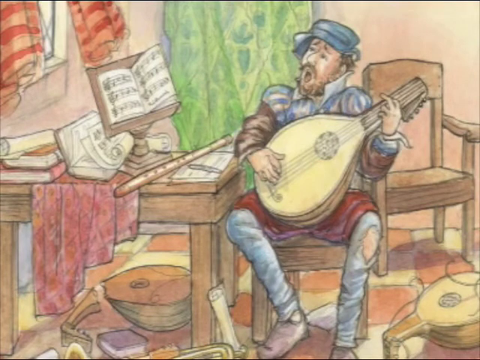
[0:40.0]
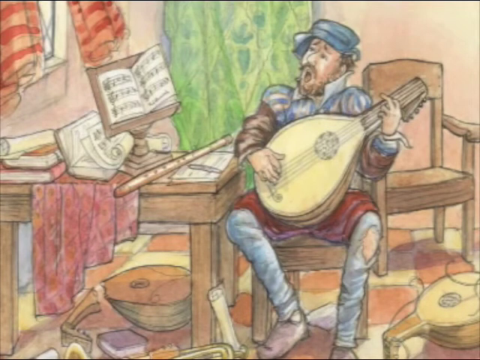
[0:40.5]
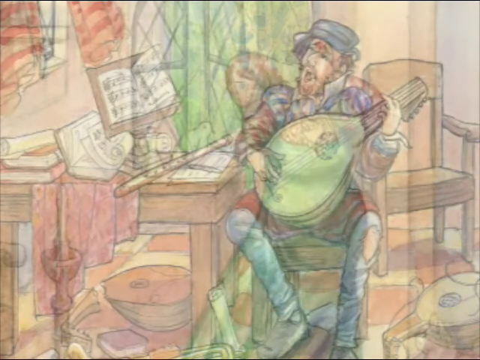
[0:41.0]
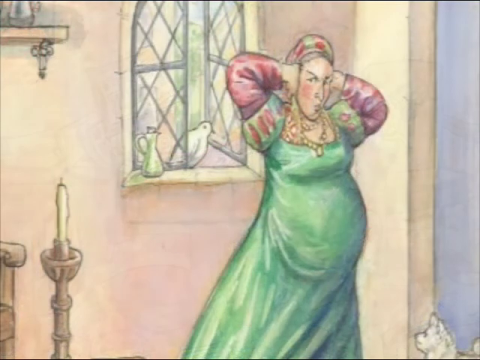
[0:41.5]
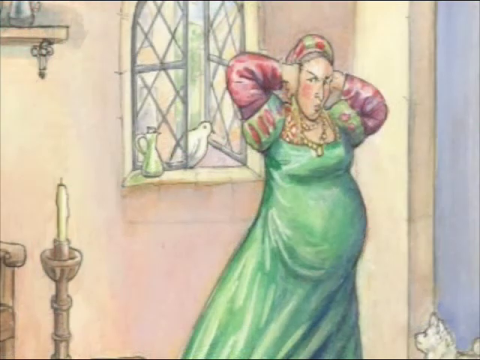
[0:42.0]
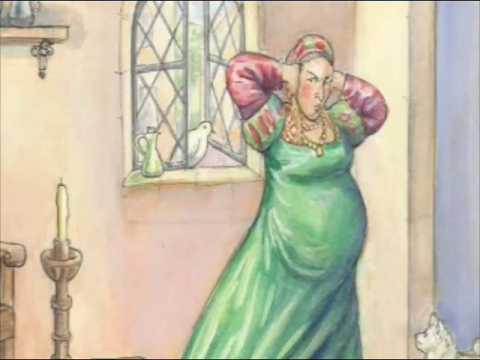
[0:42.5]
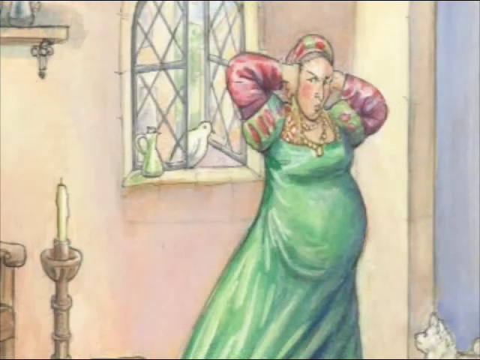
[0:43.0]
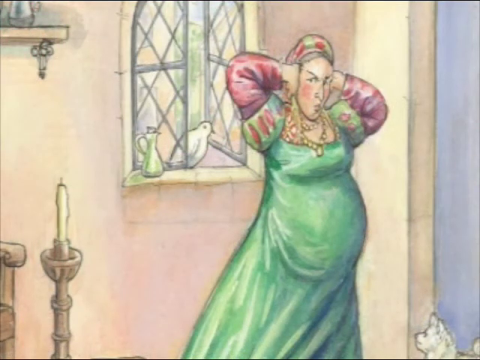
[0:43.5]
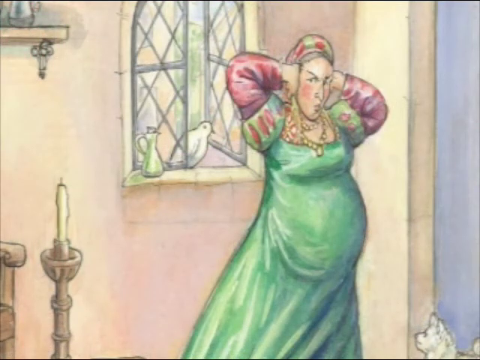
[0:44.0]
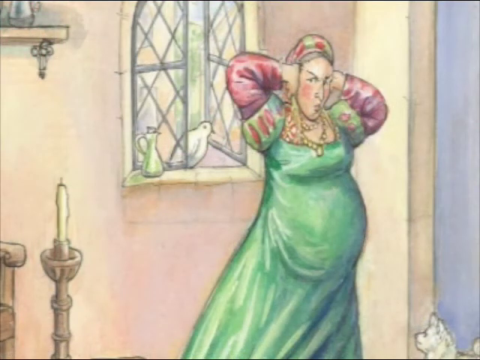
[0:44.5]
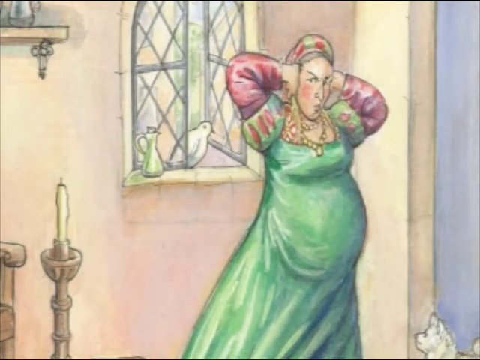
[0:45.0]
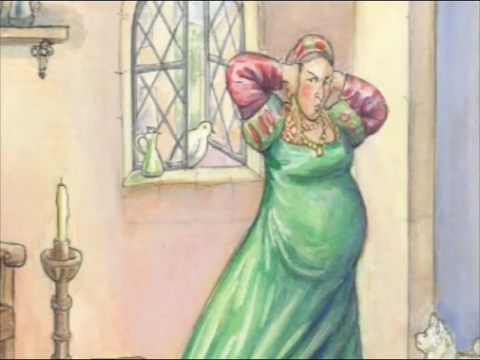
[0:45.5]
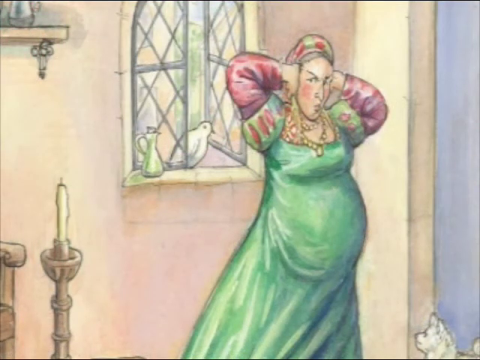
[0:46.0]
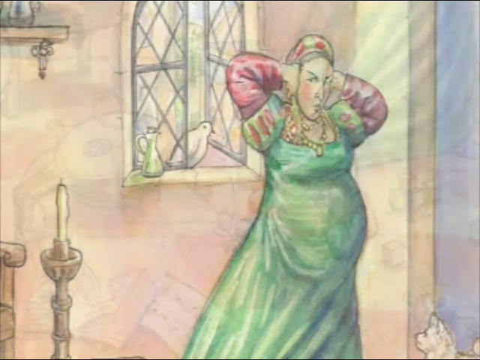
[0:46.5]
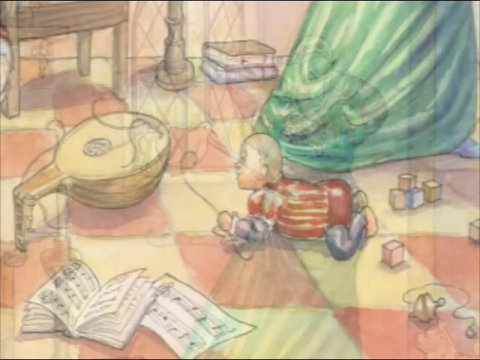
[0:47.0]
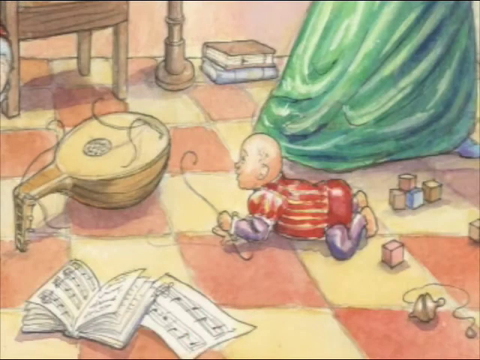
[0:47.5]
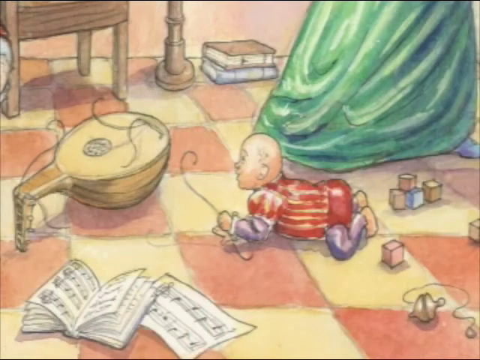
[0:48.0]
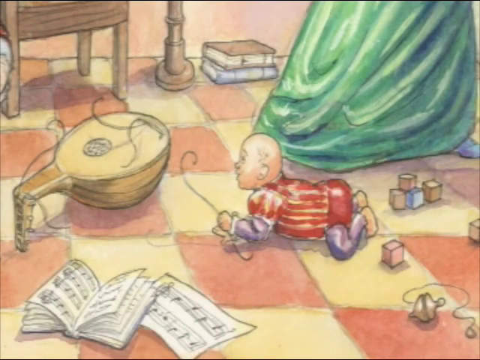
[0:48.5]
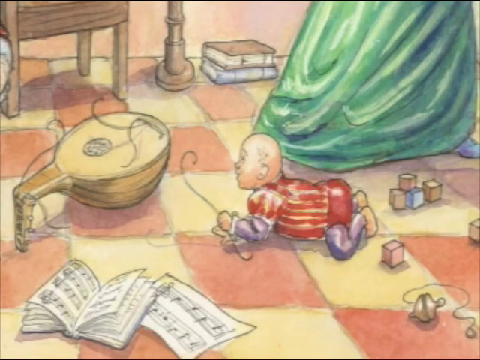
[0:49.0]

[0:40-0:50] A cartoon drawing shows a man sitting toward the center, slightly to the right, with his head turned to the left and his mouth open as if singing. He wears a blue hat and holds a large, sort of guitar-like string instrument whose name is unidentified. His legs are spread, and he wears short, sort of baggy red pants with tight-looking things underneath that have a hole at the knee. He is next to a table that seems to have a tablecloth and holds several books, rolled-up paper, some other type of instrument, and maybe a writing utensil. A music stand holds a music book, and there are curtains and a window on the wall. The floor is yellow and orange checked, with more broken instruments strewn across it. The image then flips to a drawing of a woman in a green dress looking mad and holding her ears, as if she does not like the music or singing. Her window is open, and a white dove sits in the window looking in. A candlestick is on the floor in front of her, a shelf is on the wall behind her, and she appears to be standing close to a doorway area.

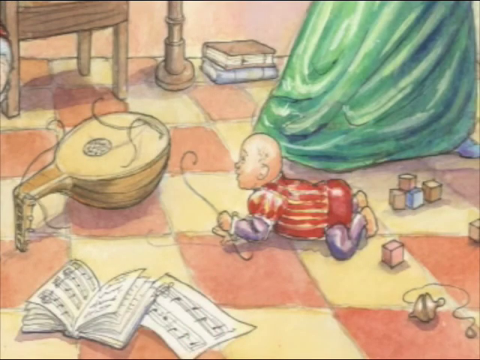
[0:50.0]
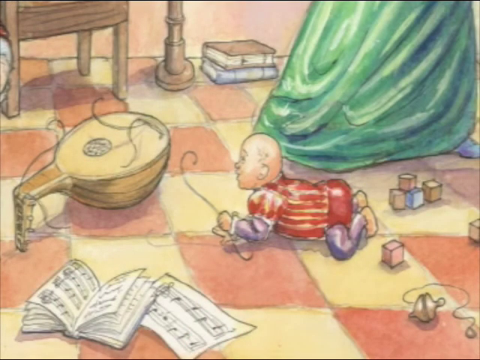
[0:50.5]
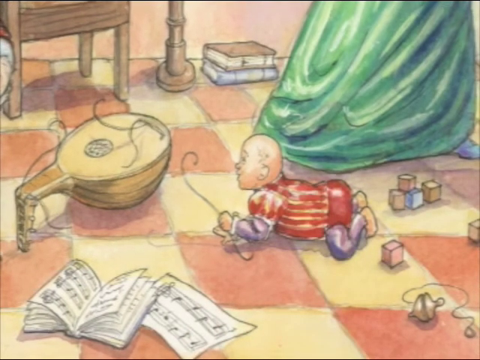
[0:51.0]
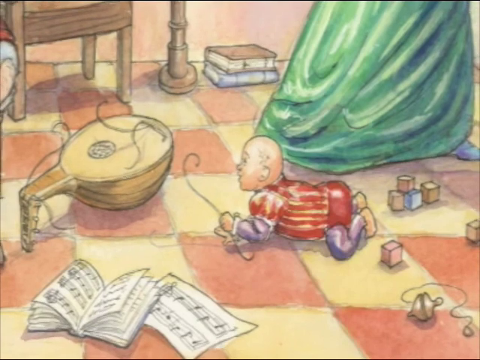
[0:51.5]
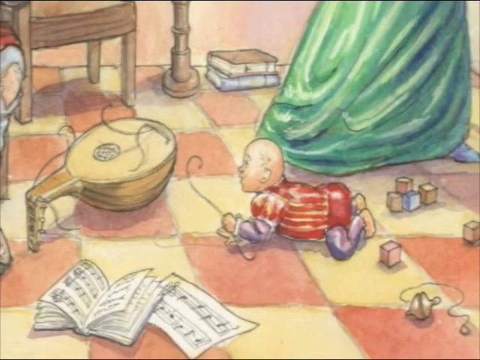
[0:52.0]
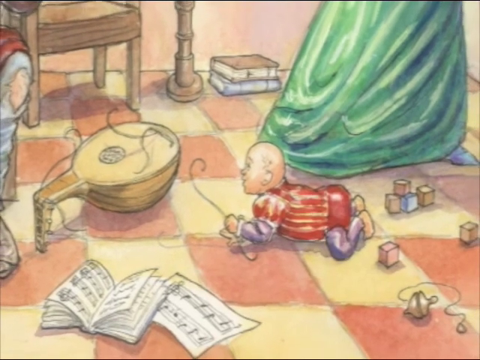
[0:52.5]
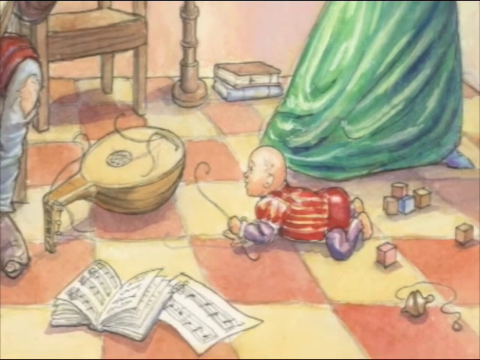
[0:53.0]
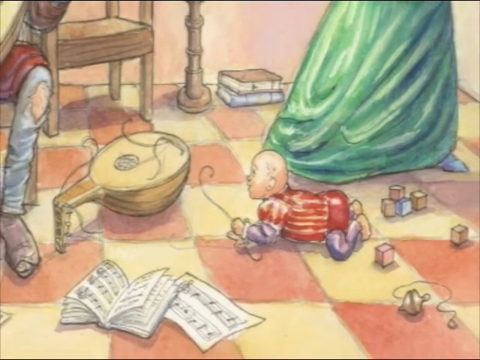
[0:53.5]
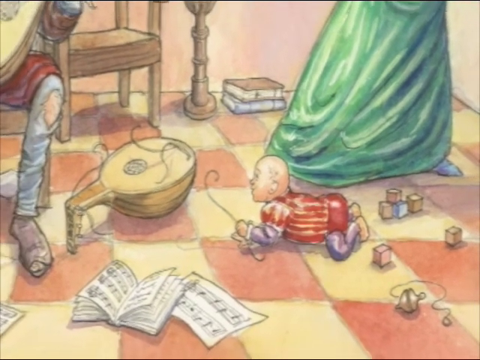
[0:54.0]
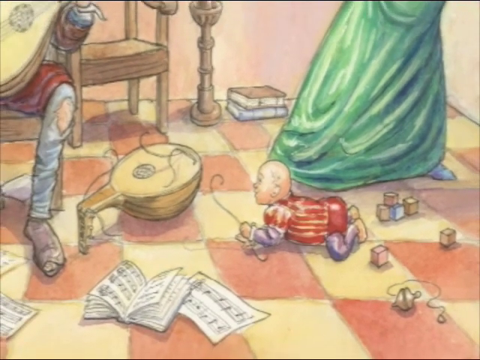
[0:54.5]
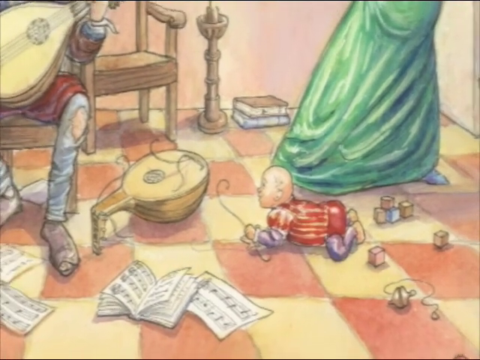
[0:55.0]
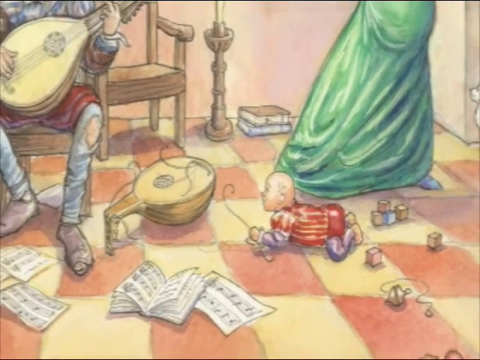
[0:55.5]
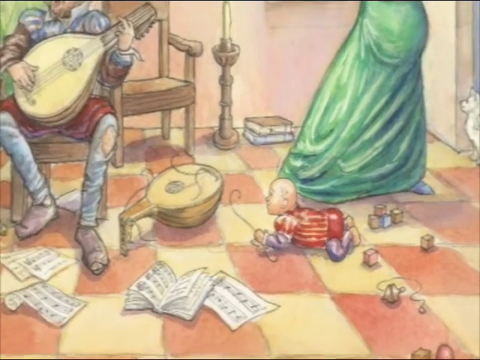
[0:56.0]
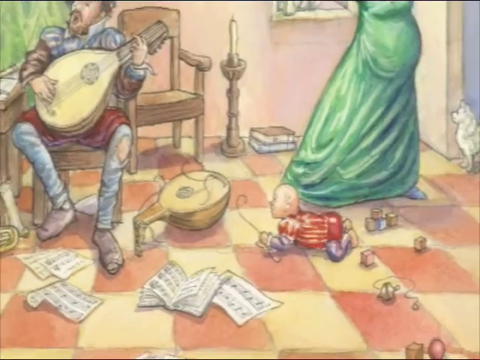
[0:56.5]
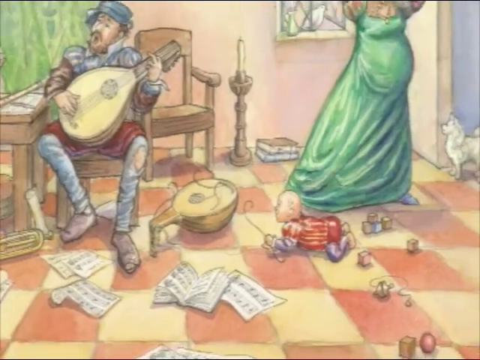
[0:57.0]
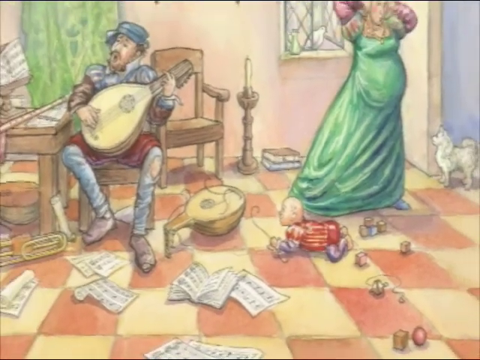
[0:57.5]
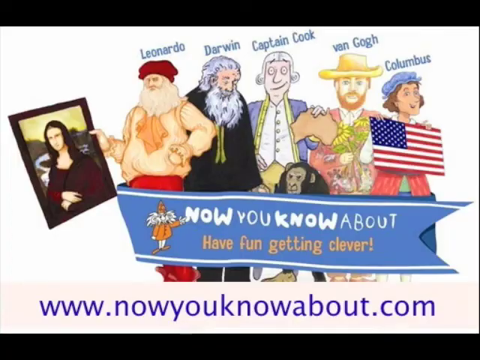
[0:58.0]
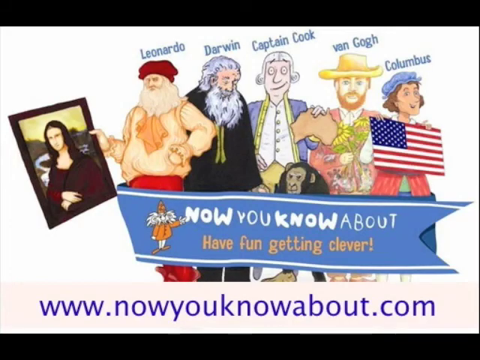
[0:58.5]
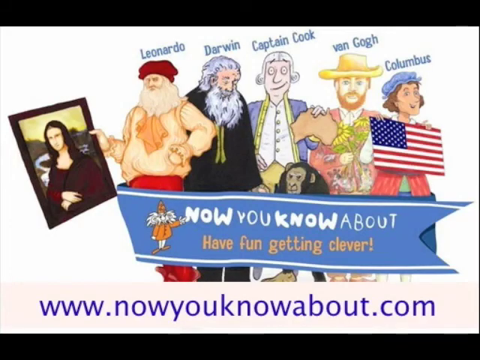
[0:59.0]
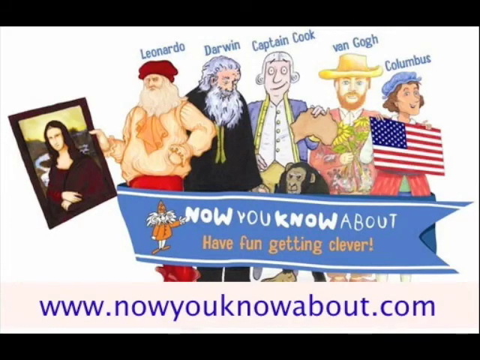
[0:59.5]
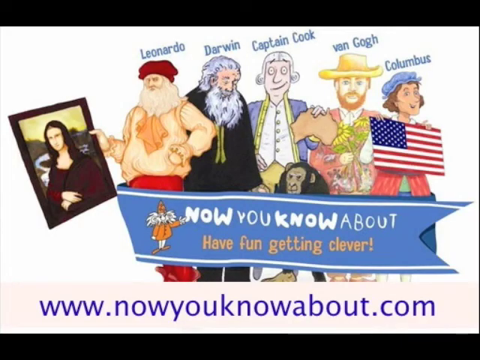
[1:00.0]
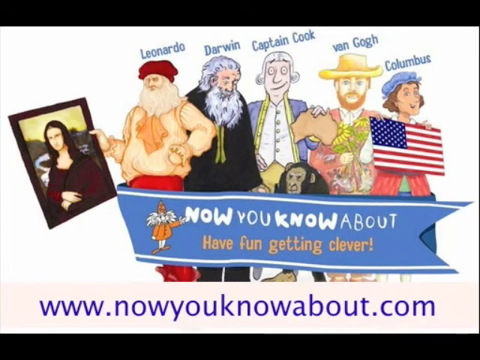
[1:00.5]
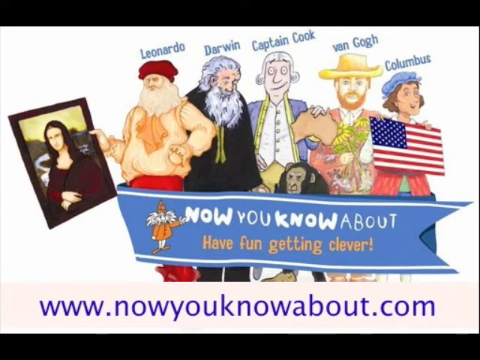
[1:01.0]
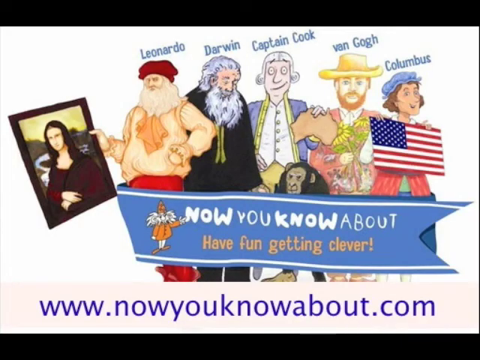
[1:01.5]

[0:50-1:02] A close-up shows a cartoon baby on the floor, on his belly, sort of crawling with his belly close to the ground. He is bald and wears a red and purple outfit. He looks directly at a broken instrument on the ground and plays with a string from it. The floor is yellow and orange checked, and various toys, books, and open music books are around him. The image zooms out to reveal the earlier scenes around him: toward the back right is the woman in the green dress holding her ears, who looks like she is probably pregnant, and on the left the man sings while holding his instrument and looking at his music book. This flips to an image of several men from history: Leonardo, Darwin, Captain Cook, Van Gogh, and Columbus, with a banner that says "Now, you know about Have fun getting clever." Leonardo holds the Mona Lisa. At the bottom is a URL in blue reading "www.nowyouknowabout.com" on a white background.